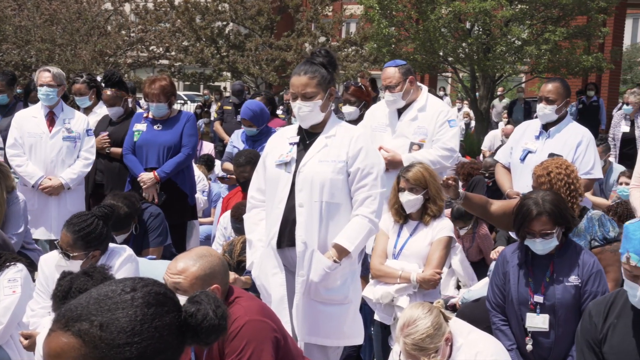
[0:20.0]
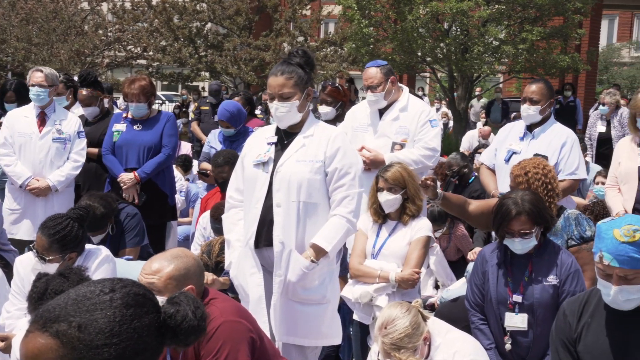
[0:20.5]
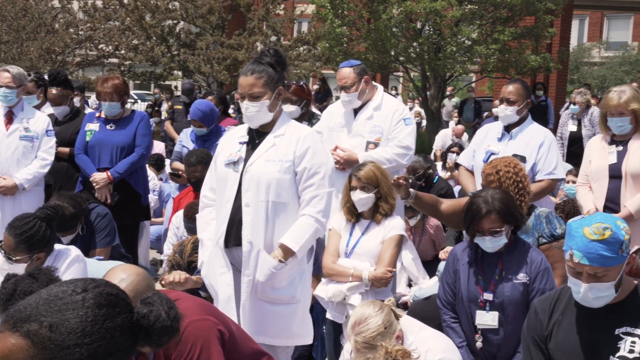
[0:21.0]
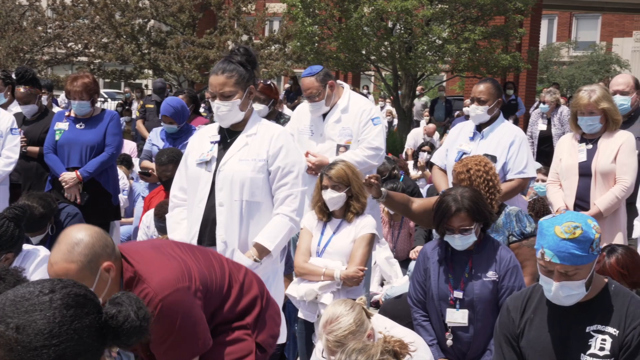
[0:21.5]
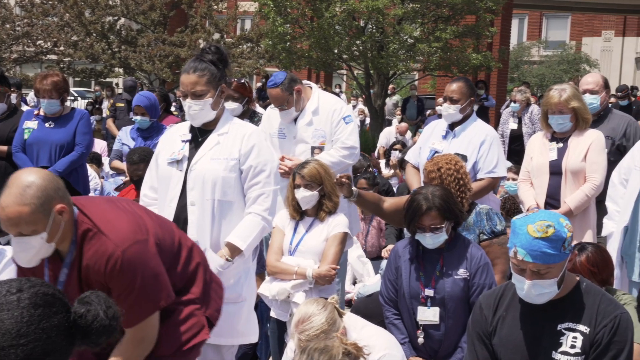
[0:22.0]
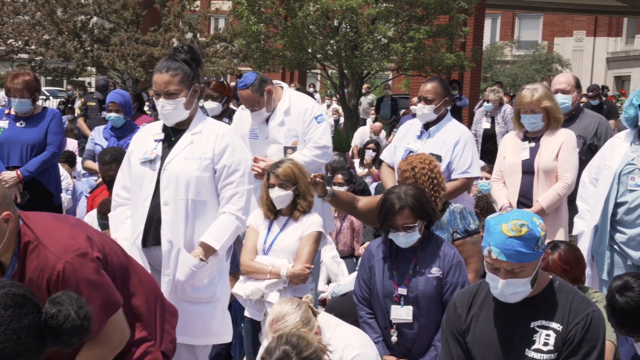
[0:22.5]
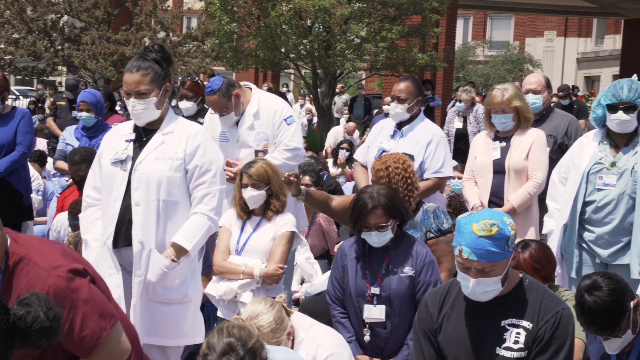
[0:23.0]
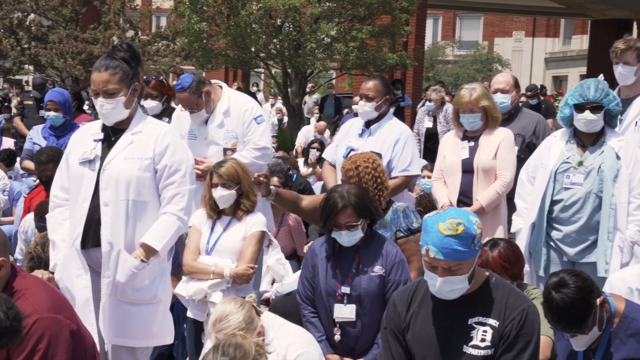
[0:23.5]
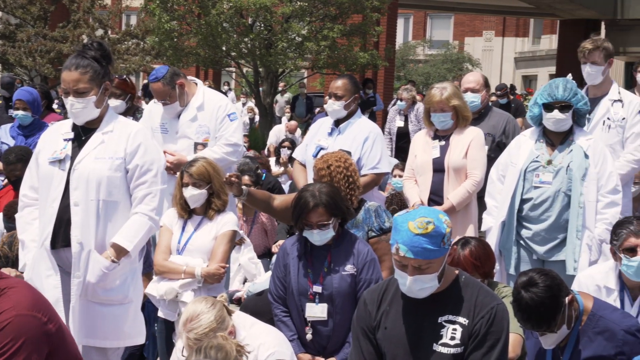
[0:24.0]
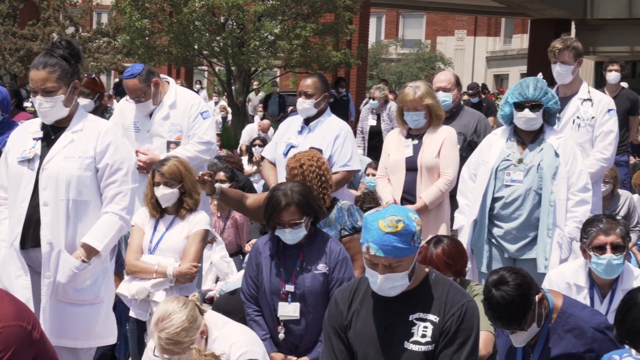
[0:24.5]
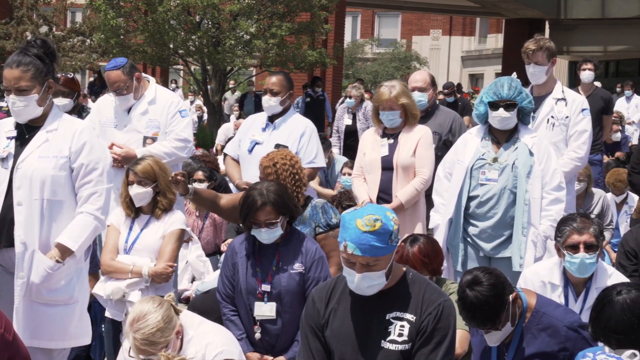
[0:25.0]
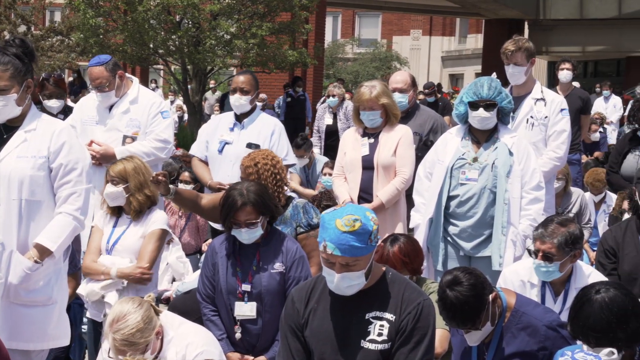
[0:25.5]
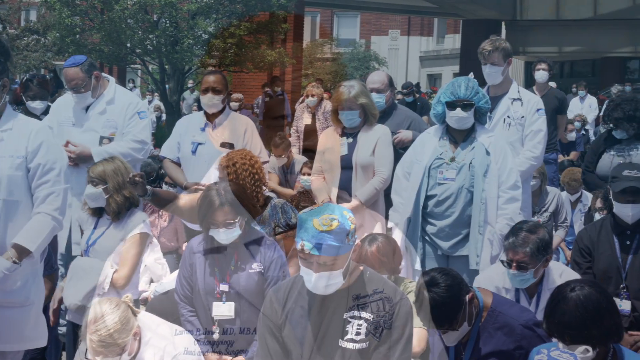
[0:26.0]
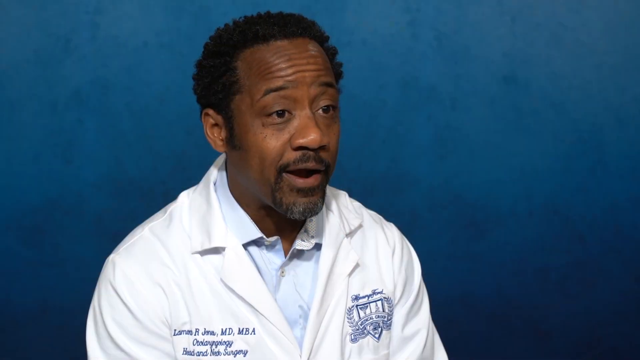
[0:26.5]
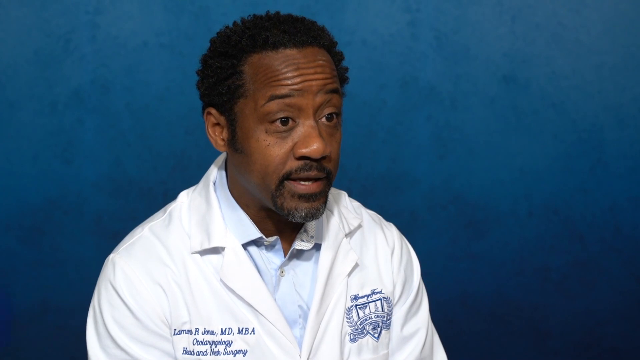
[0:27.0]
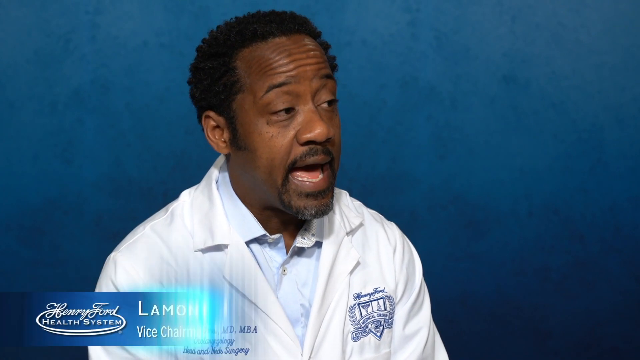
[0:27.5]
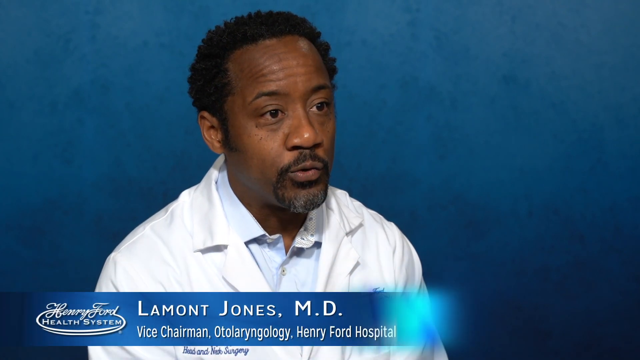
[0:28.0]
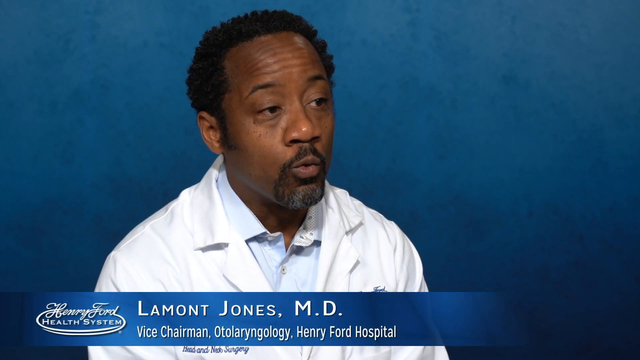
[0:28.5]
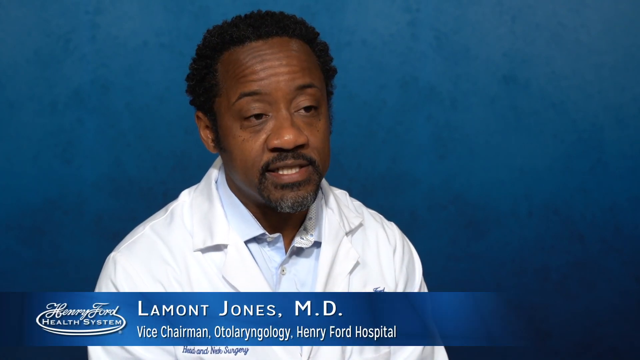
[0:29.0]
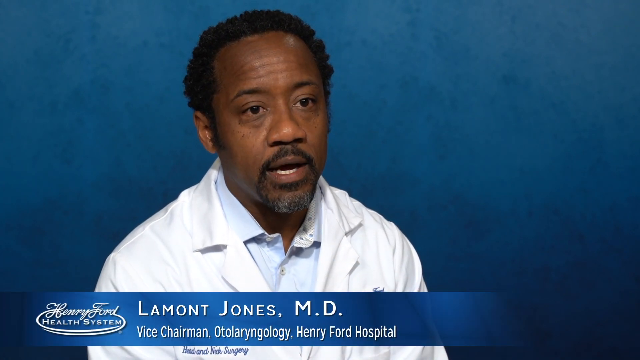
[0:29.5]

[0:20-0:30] An overview shows a crowd assembled in front of a red brick building. Some people appear to be kneeling, some have their heads bowed, many are dressed in doctor's white coats, some are in surgical scrubs, and some are in civilian everyday dress. All of them are wearing face masks. The camera pans over the crowd. The scene switches to a man sitting in a room with a blue backdrop. He wears a white coat and speaks to someone behind the camera. A text box at the bottom of the screen identifies him as "Lamont Jones, MD, Vice Chairman, Otolaryngology, Henry Ford Hospital."